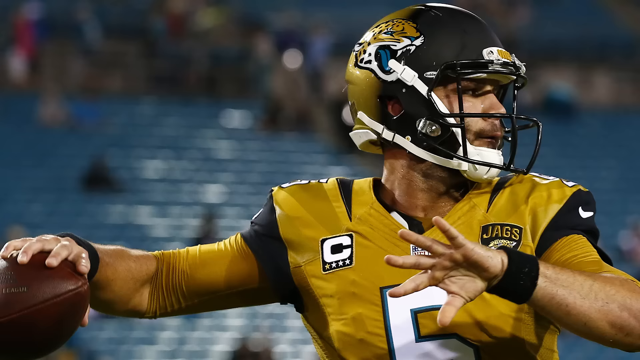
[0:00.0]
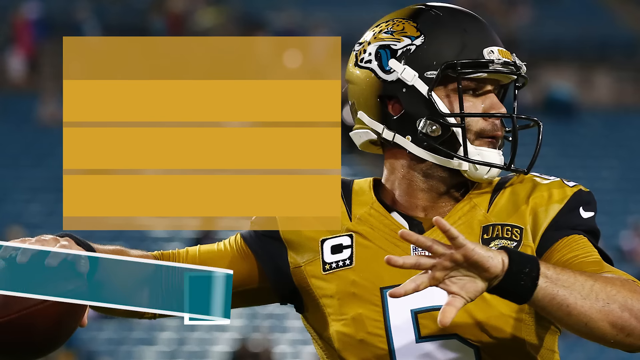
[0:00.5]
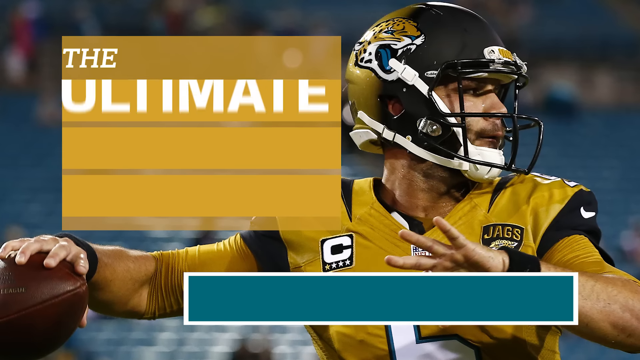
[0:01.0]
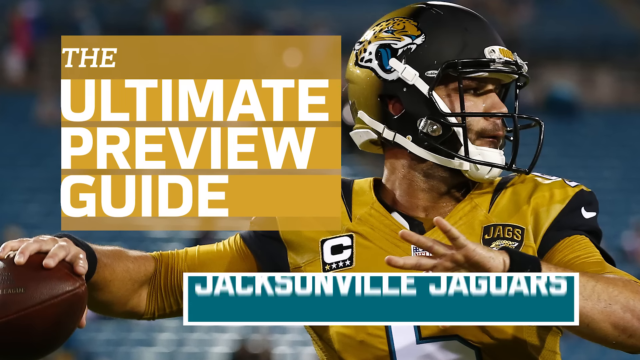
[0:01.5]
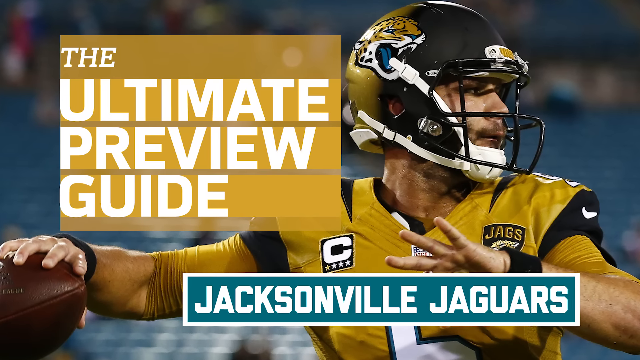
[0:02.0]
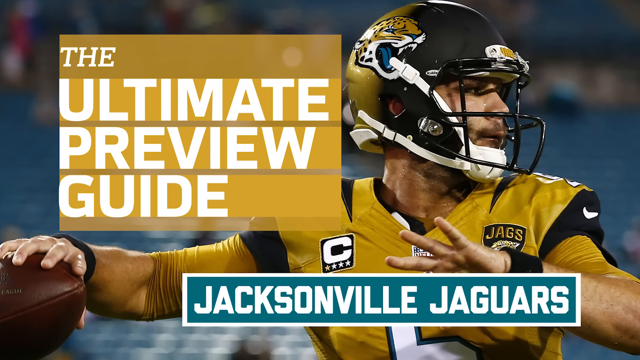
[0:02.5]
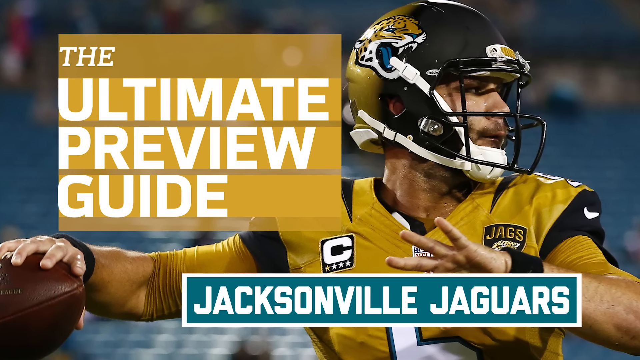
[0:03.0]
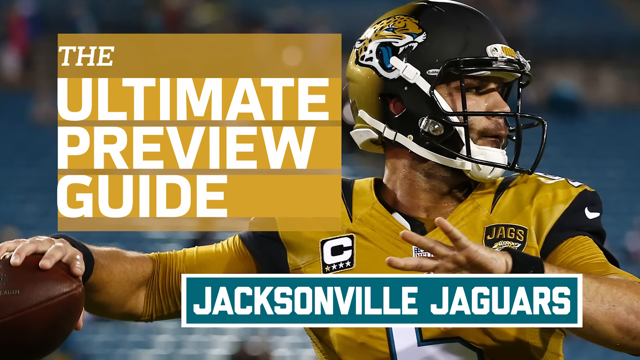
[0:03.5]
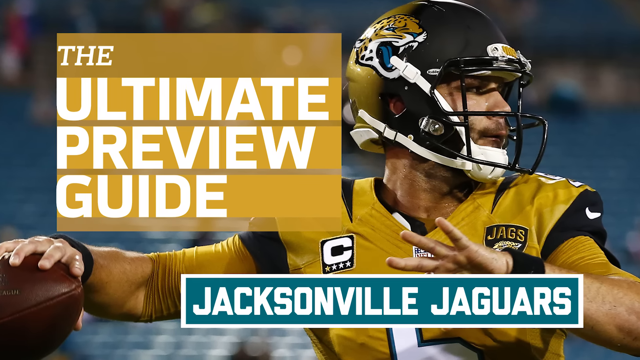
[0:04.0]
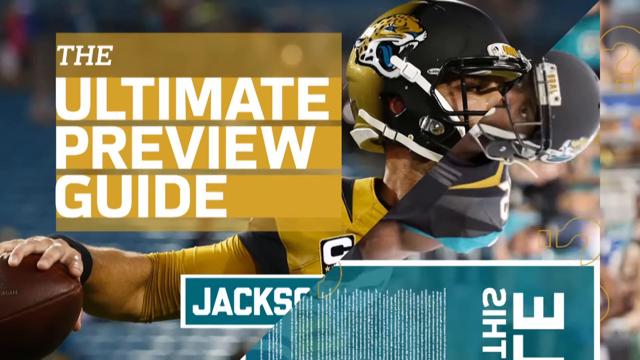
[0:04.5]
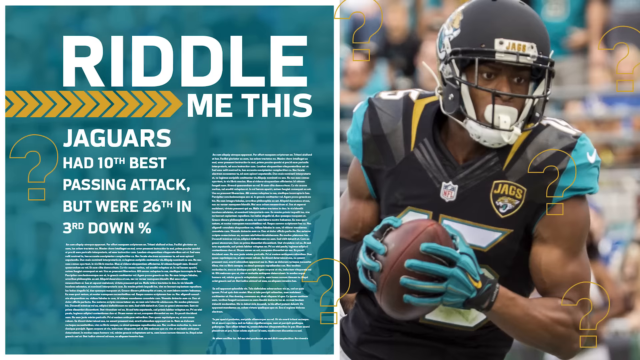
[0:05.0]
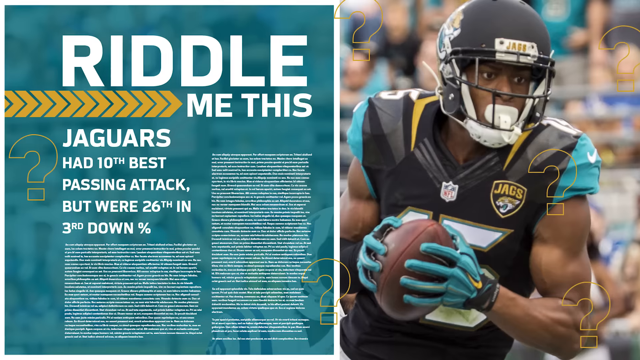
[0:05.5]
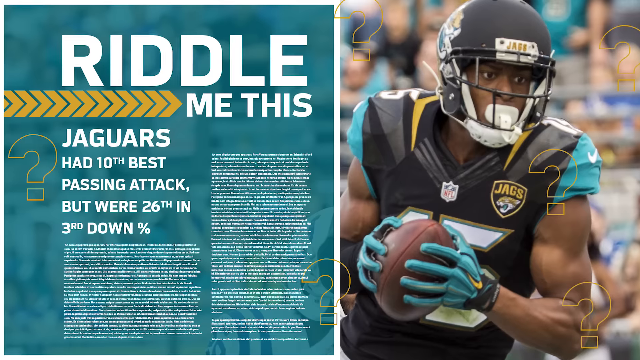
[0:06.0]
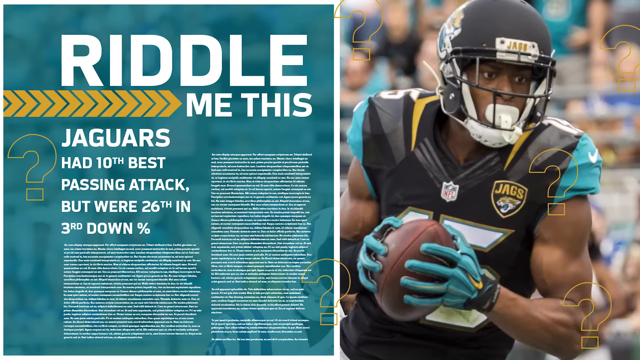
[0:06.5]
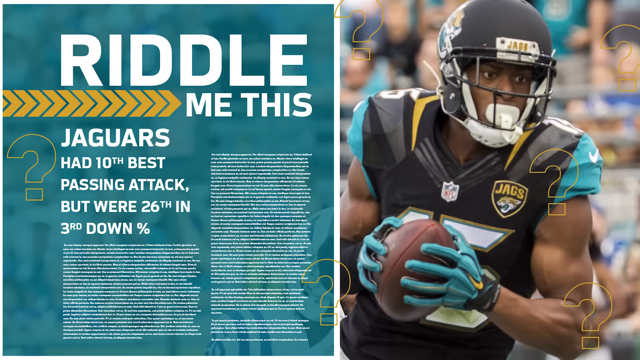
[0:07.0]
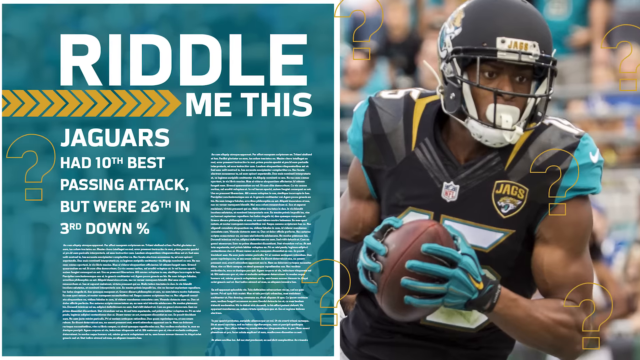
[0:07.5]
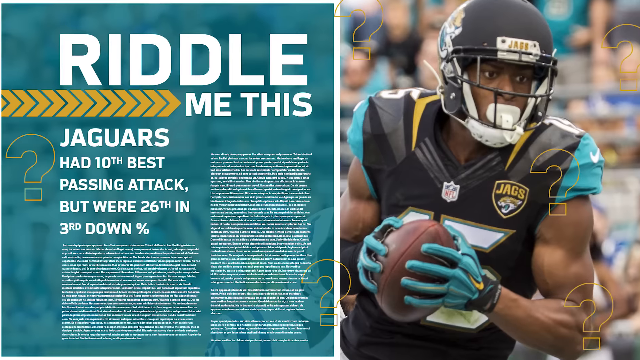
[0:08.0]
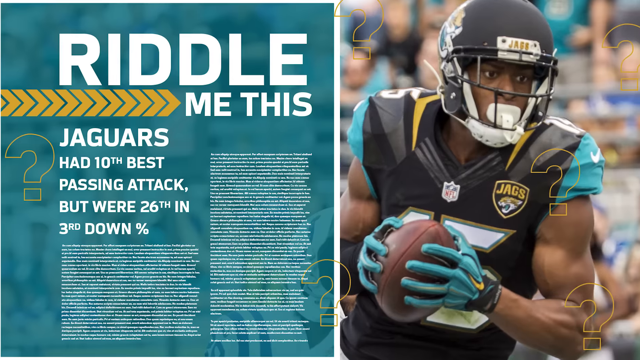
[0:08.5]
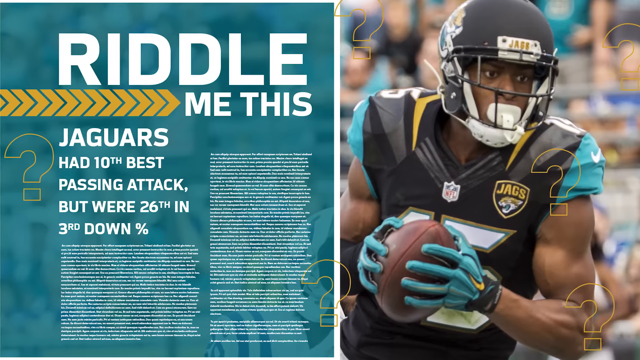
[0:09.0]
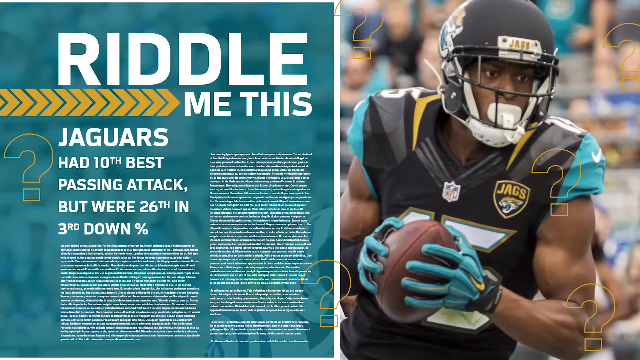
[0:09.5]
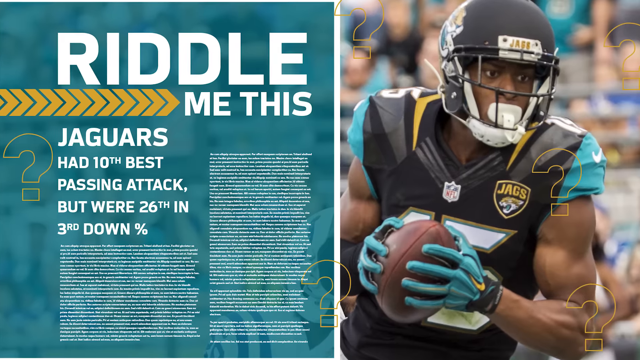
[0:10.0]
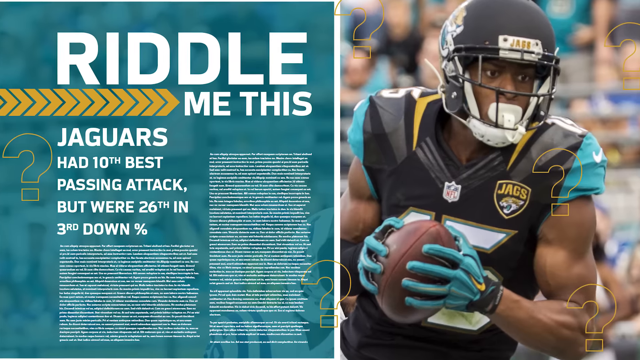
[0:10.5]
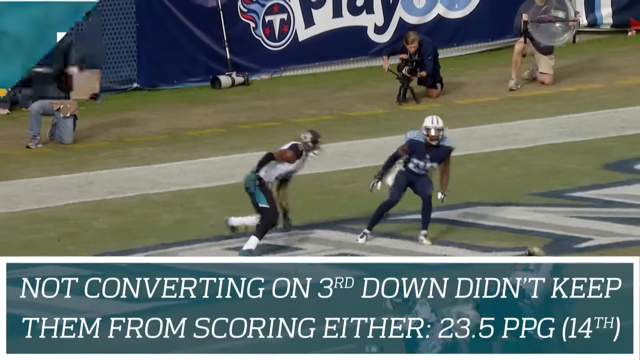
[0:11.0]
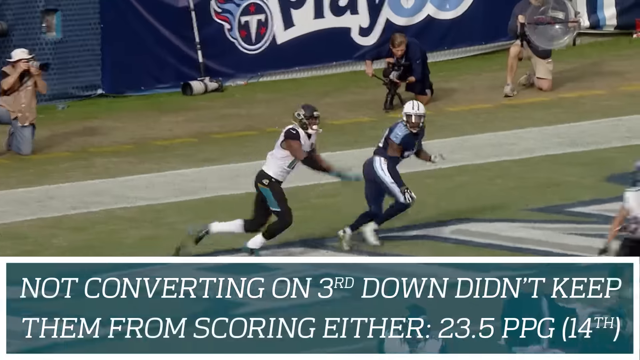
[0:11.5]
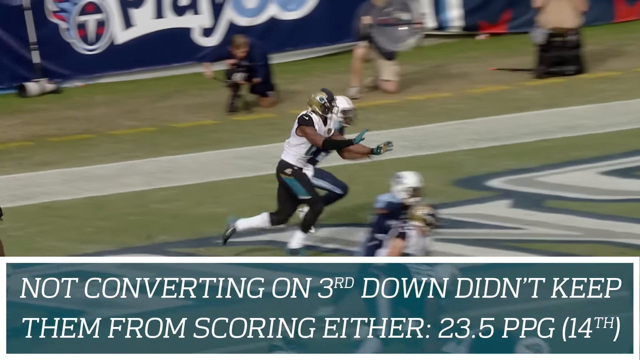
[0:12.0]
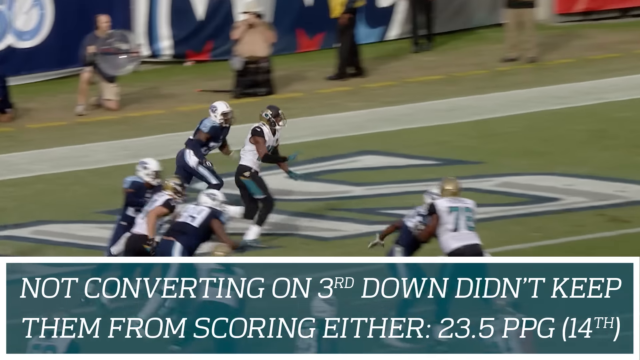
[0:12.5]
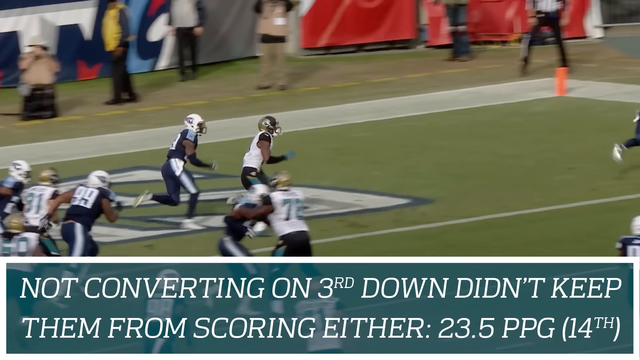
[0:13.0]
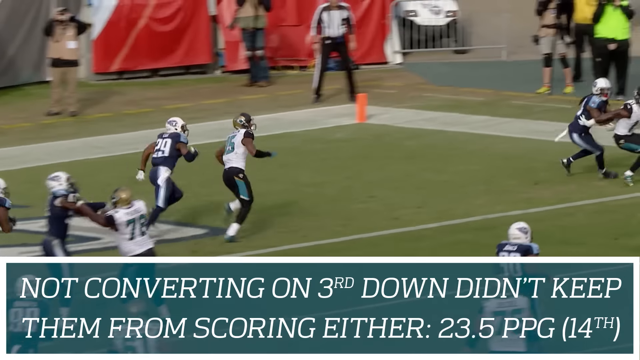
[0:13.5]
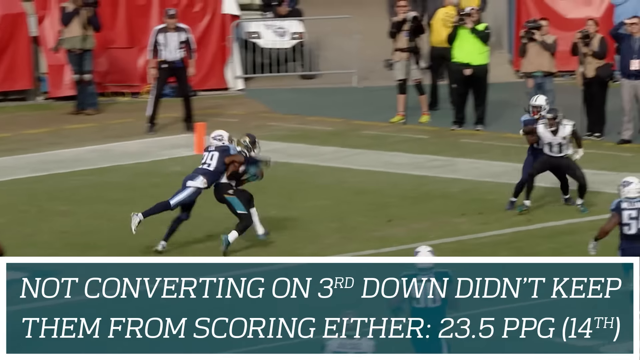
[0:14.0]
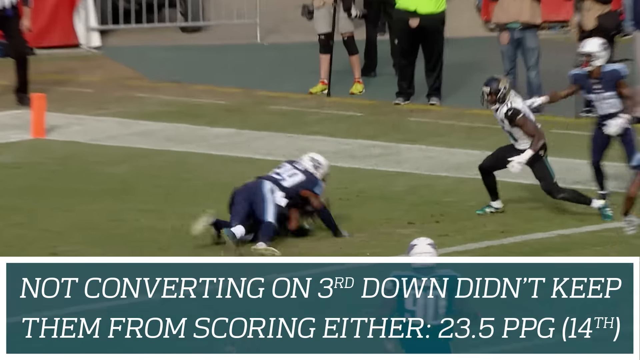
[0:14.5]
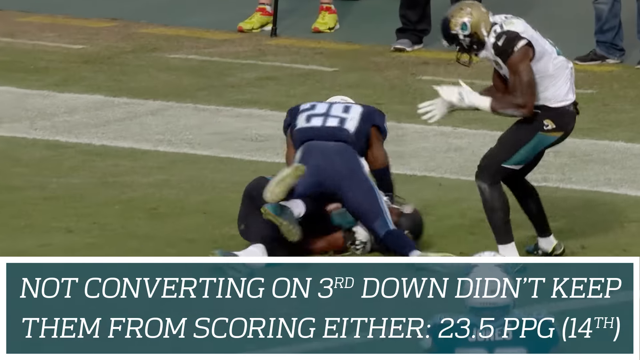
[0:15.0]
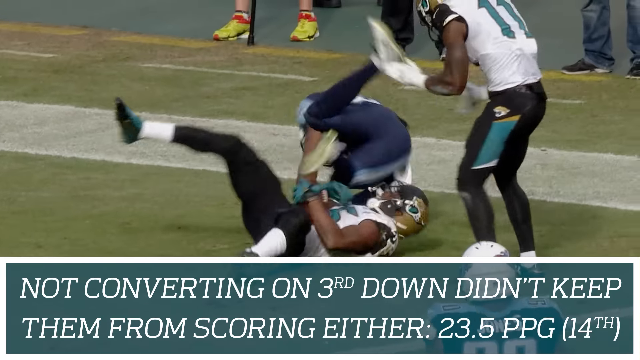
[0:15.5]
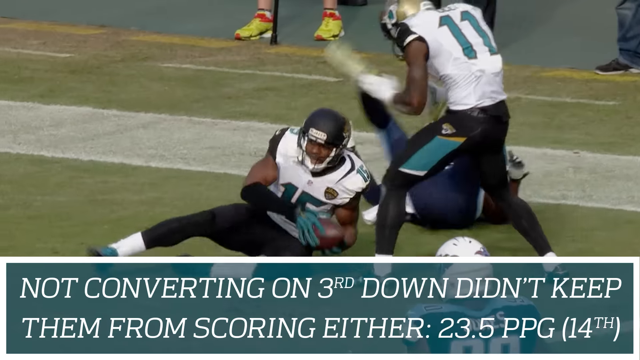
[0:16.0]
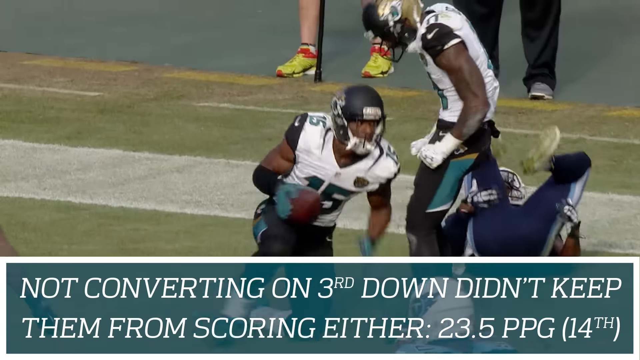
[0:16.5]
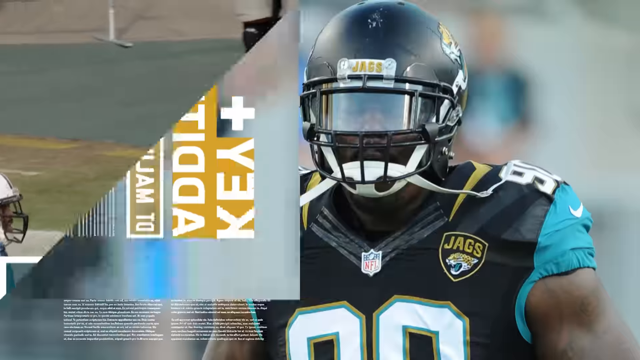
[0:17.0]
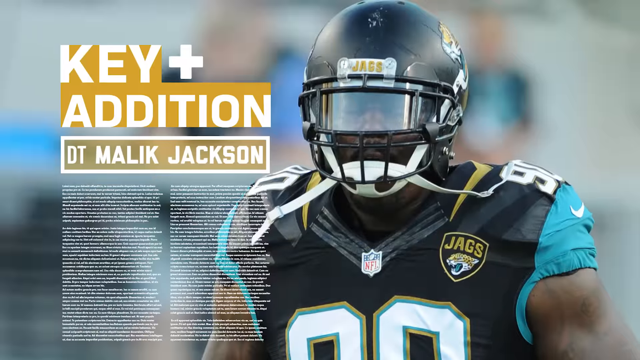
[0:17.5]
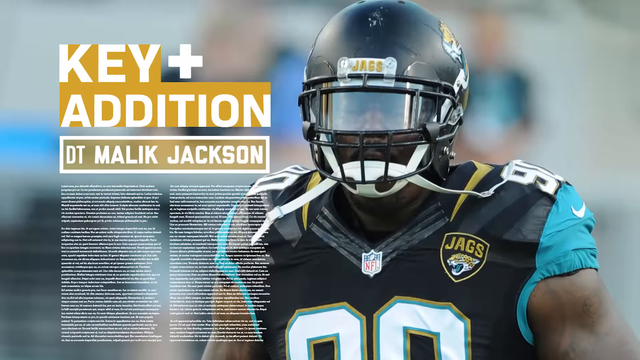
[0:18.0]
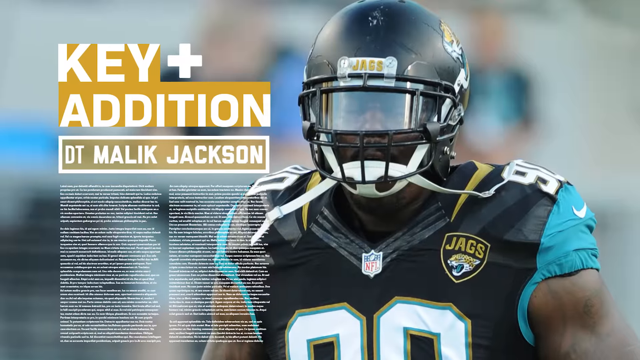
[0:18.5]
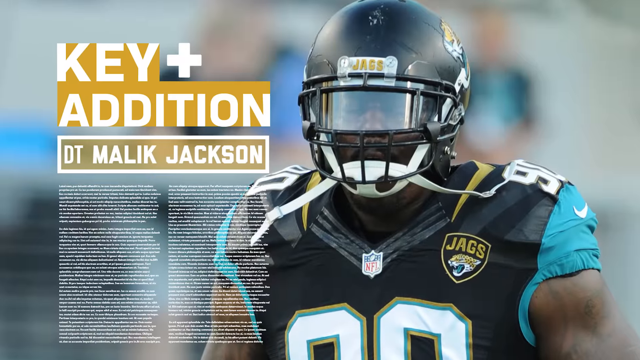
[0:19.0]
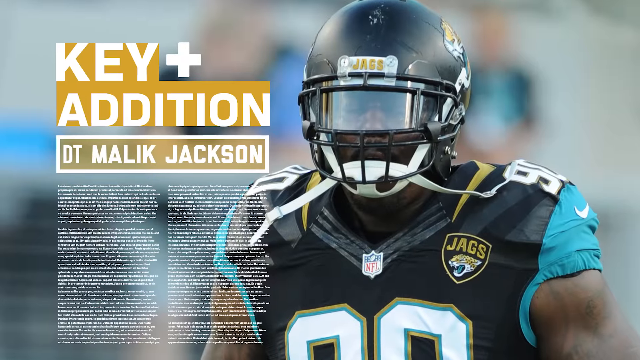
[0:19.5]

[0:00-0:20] An NFL quarterback, Blake Bortles, is on the right side about to throw the ball. His right arm is extended toward the bottom left corner with the ball in his hand, and he is looking to the right. To the left is the title "The ultimate preview guide," and at the bottom is the name "Jacksonville Jaguars." The scene changes to a still image on the right side of Jacksonville Jaguars player number 15, who has possession of the ball and is looking forward to the right. On the left side, captions read "Riddle me this, Jaguars had 10th best passing attack, but were 26th in third down percent." Next, in a game between the Jacksonville Jaguars and the Tennessee Titans, a receiver goes to the right side of the field in the end zone, the ball is thrown to him, and he falls to the ground, apparently completing the catch. Captions at the bottom read "Not converting on third down didn't keep them from scoring either. 23.5 points per game. 14th in the league." The player who caught the ball and scored gets up off the ground.